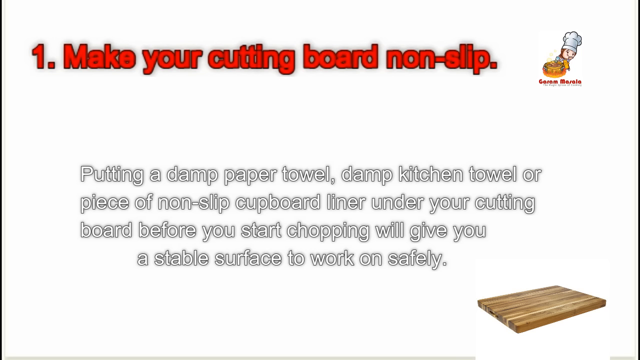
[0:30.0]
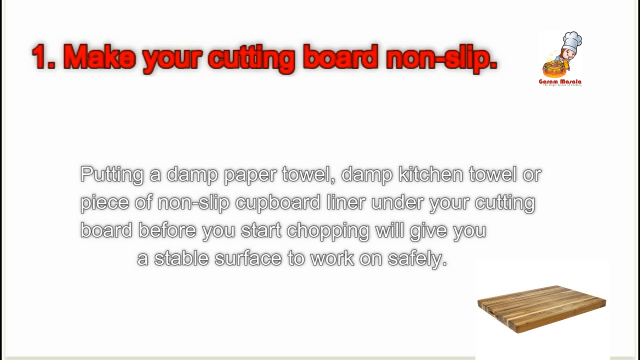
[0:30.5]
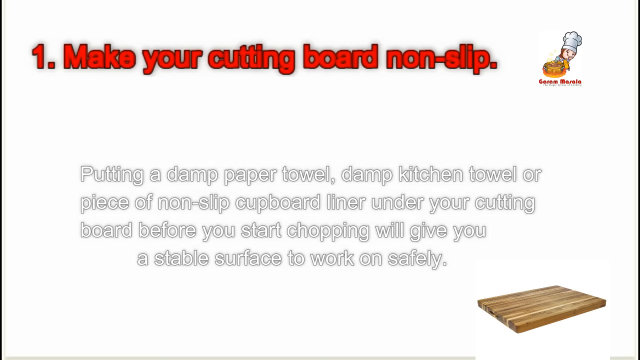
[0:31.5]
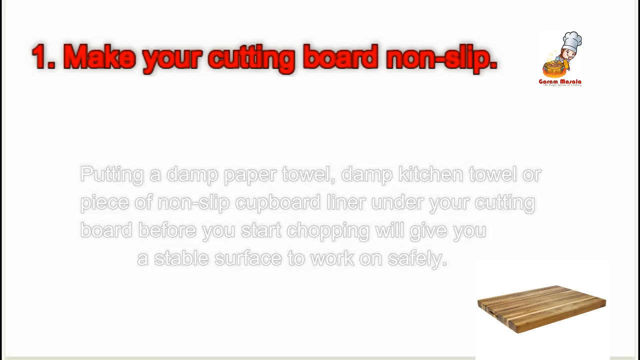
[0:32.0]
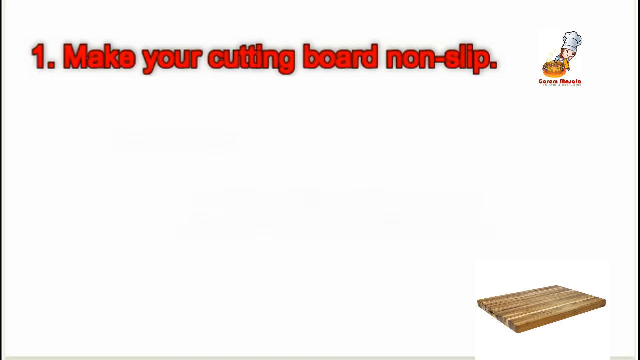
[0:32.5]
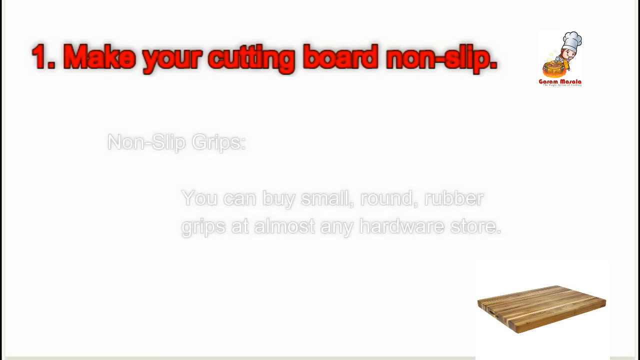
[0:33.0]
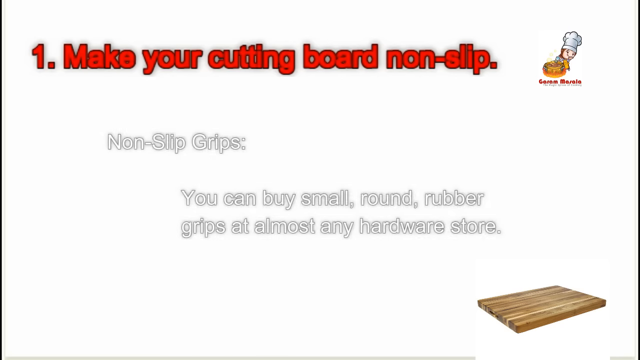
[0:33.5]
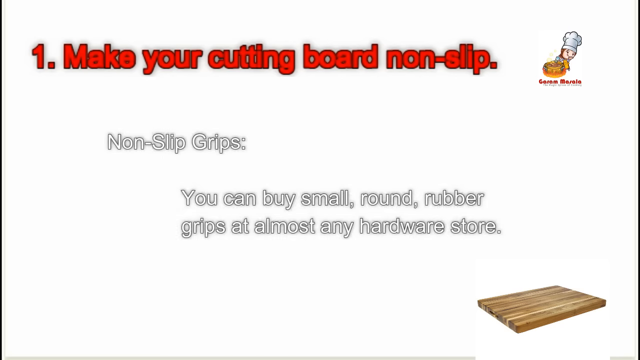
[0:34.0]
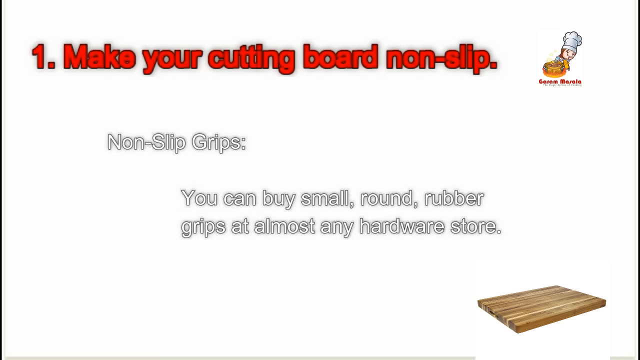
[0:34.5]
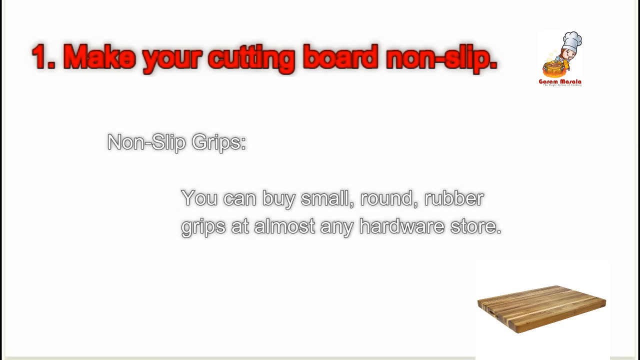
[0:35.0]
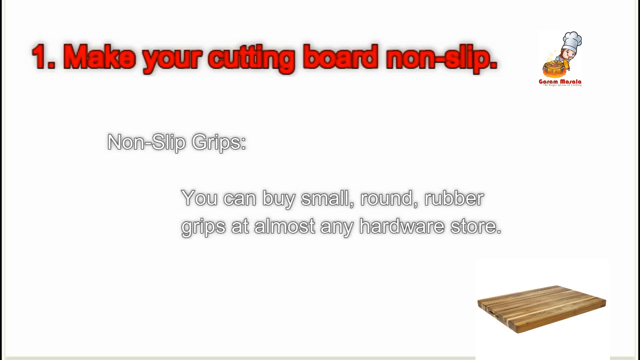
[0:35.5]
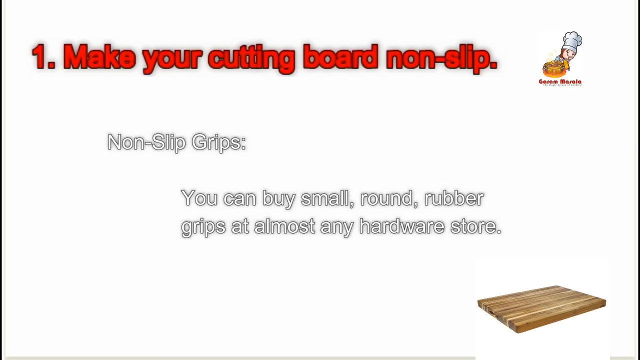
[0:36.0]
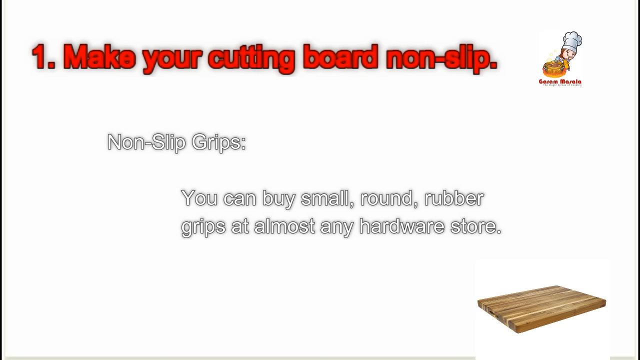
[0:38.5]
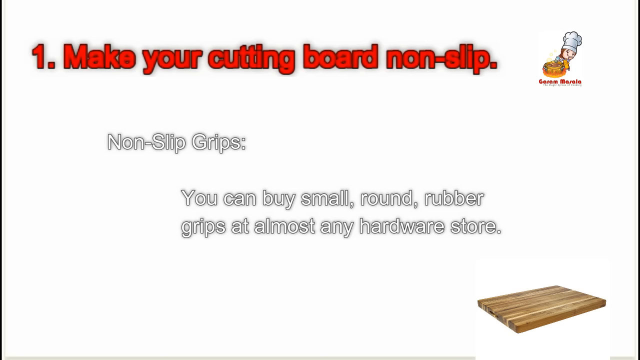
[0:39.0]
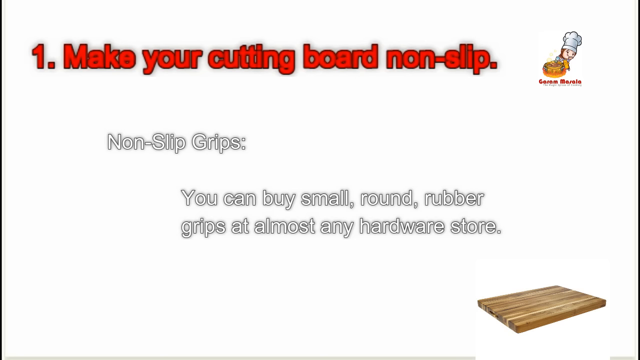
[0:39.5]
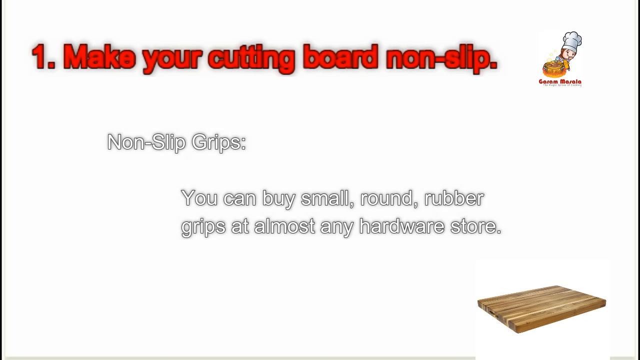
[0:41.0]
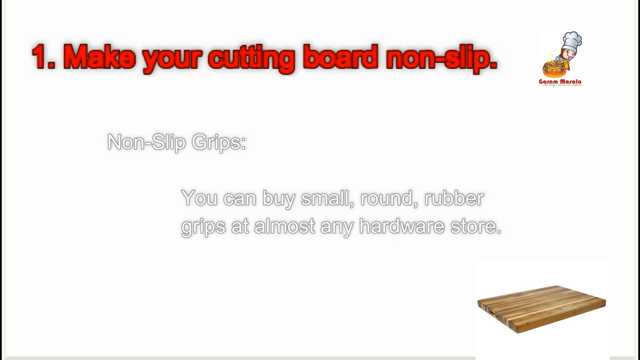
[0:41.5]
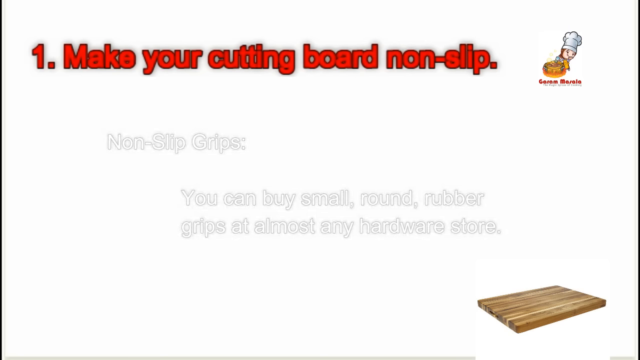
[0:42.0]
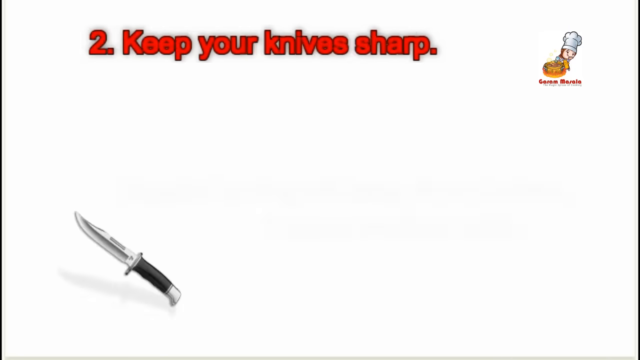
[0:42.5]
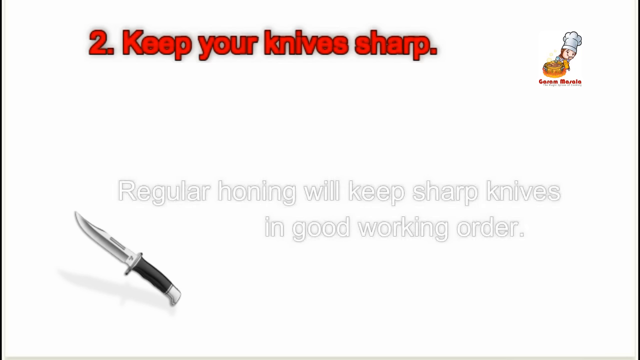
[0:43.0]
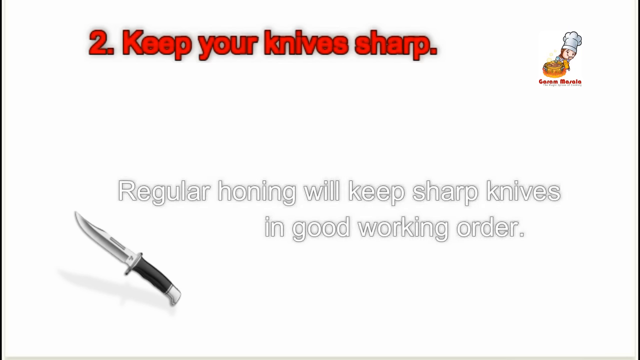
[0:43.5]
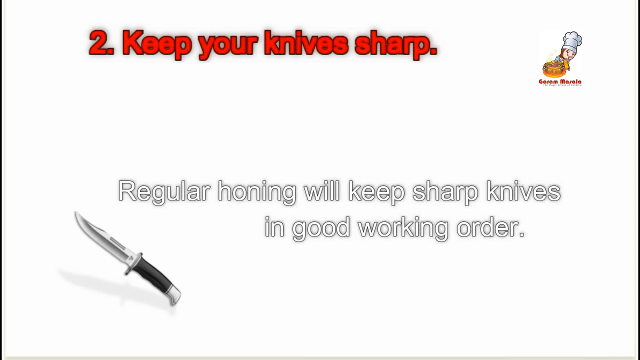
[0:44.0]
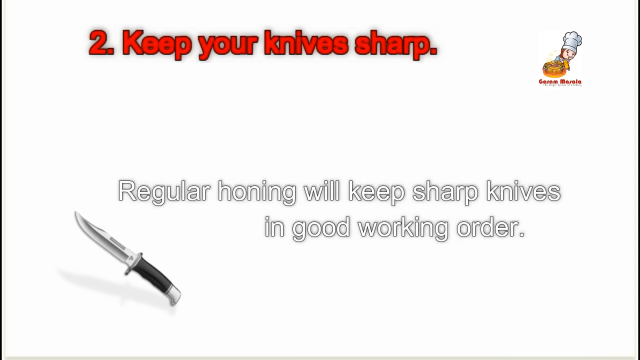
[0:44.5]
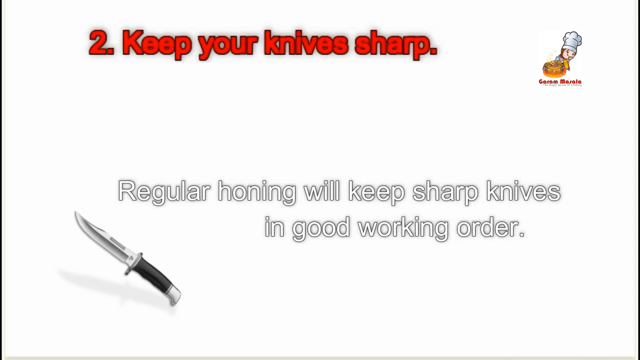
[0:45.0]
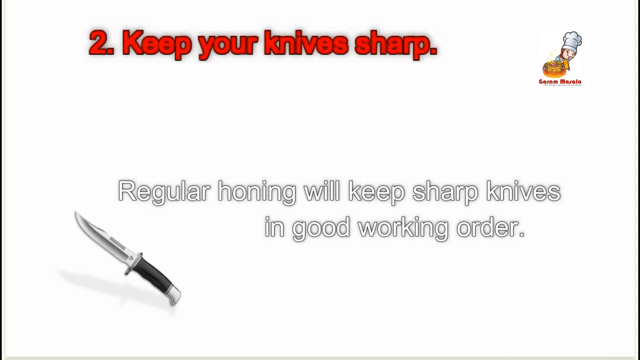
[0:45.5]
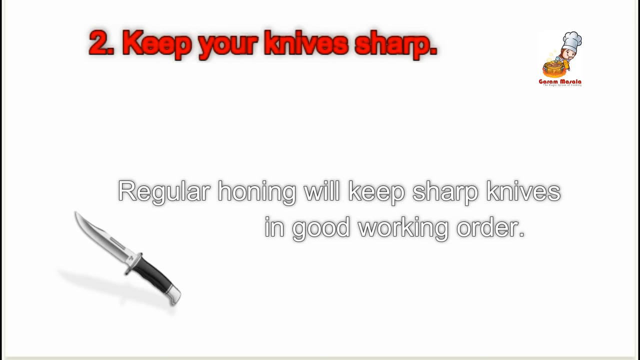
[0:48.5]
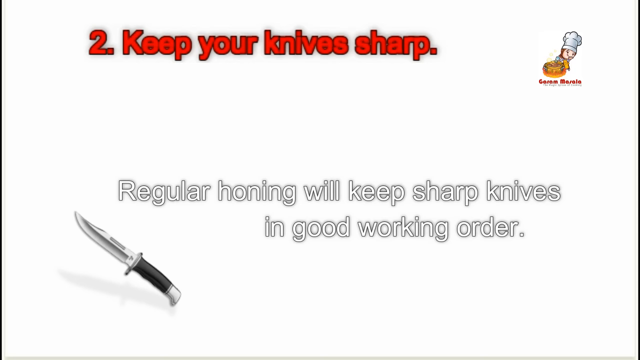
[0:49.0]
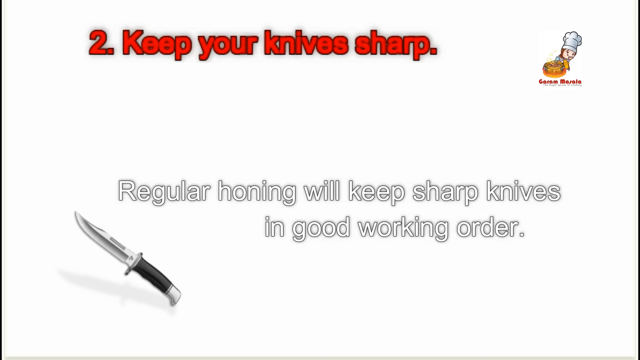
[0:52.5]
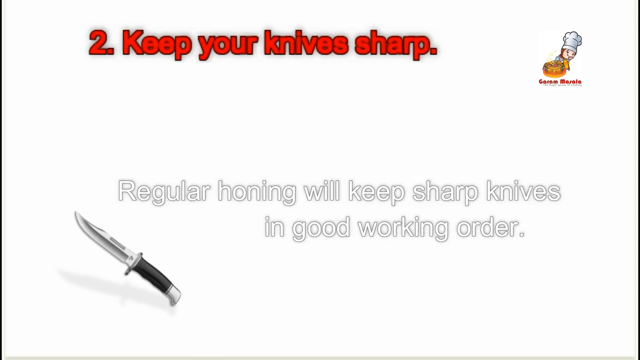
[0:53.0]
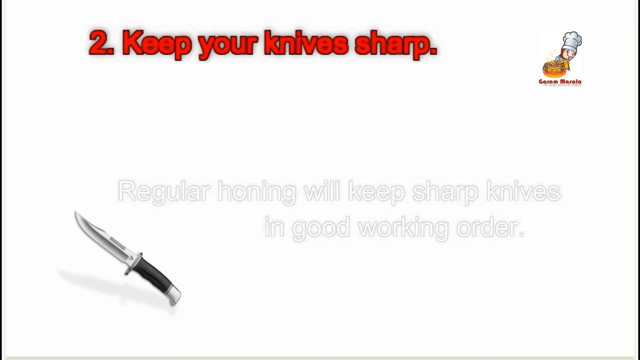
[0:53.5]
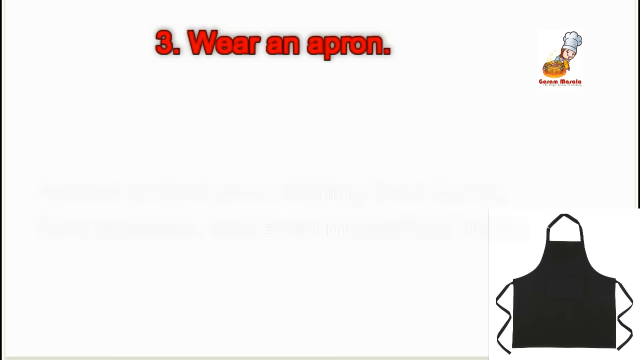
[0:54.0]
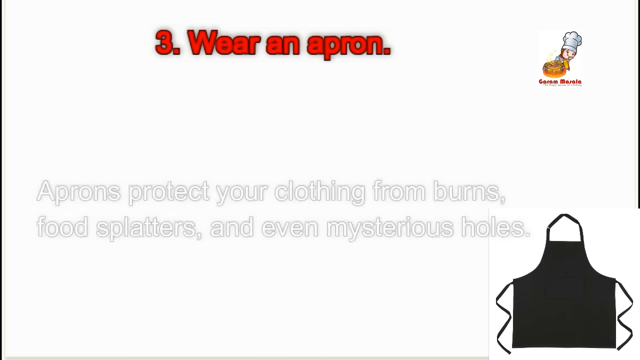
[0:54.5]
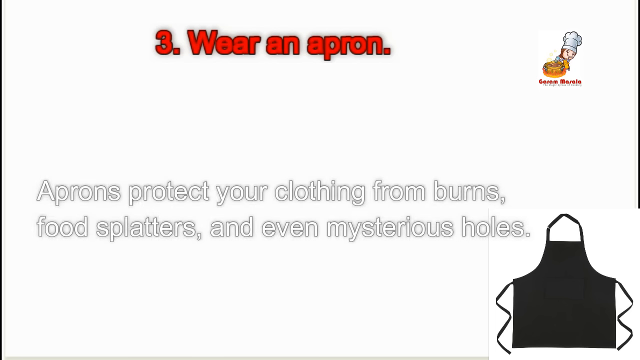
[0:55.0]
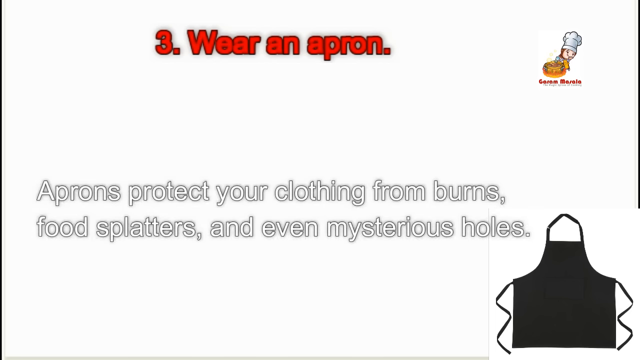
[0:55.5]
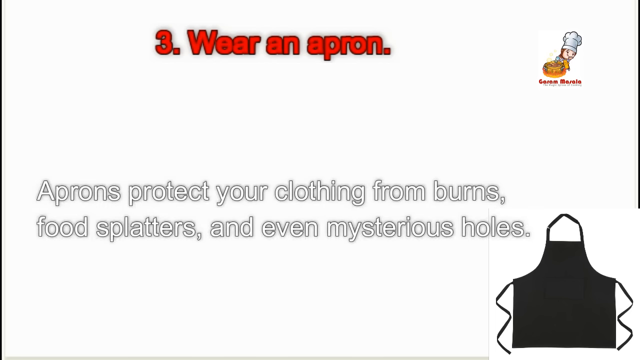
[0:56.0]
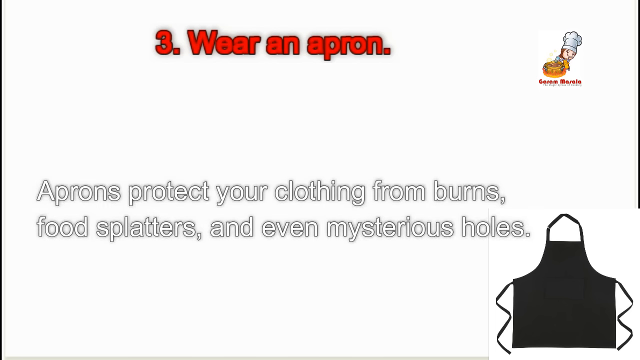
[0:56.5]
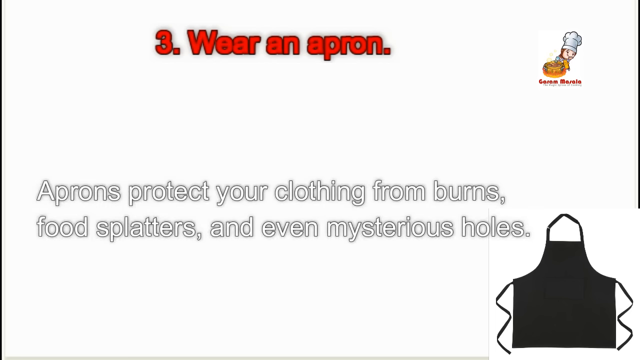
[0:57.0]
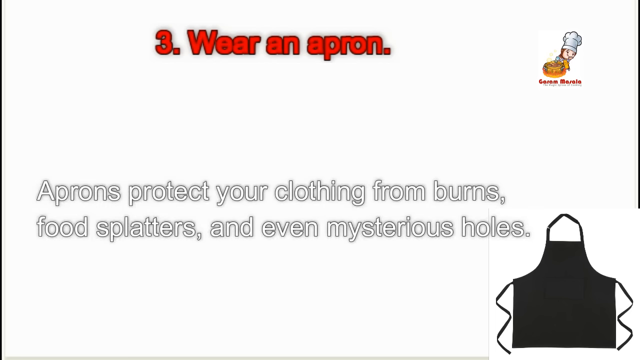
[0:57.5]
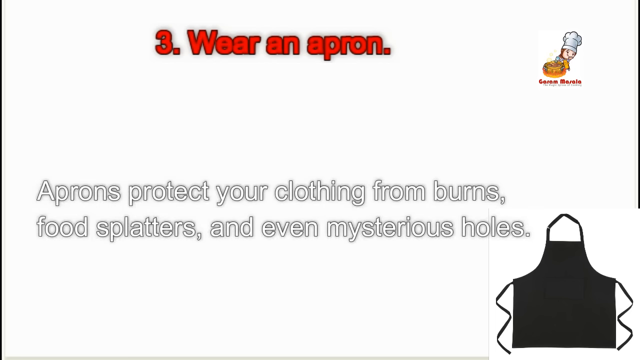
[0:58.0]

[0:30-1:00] A slide shows red text reading "number one, make your cutting board non-slip." In the top right corner is a logo of a cartoon character wearing a white chef's hat. Underneath, white text with a gray border reads "putting a damp paper towel, damp kitchen towel, or a piece of non-slip cut board liner under your cutting board. Before you start chopping, it will give you a stable surface to work on safely." A wooden cutting board is in the lower right corner, and the background is white. The video cuts to another slide where only the white text with the gray border changes, now reading "non-slip grips. You can buy small, round, rubber grips at almost any hardware store." It then cuts to a different slide with the number two in red text and "keep your knives sharp," with white text underneath reading "regular honing will keep sharp knives in good working order." On the lower left side is a knife with a shadow behind it. The video then cuts to another slide.